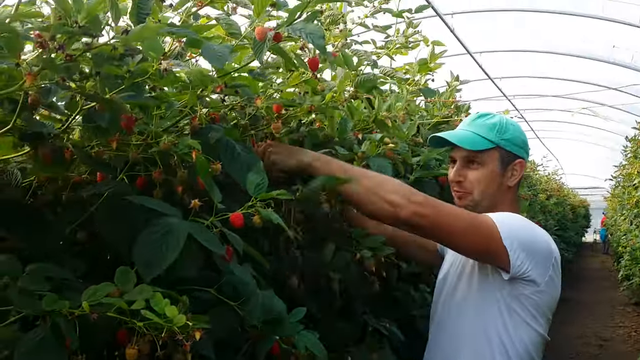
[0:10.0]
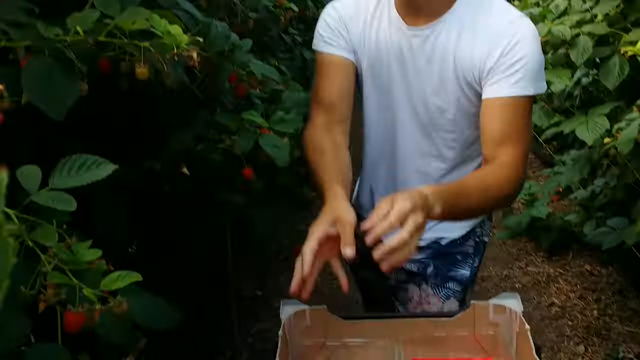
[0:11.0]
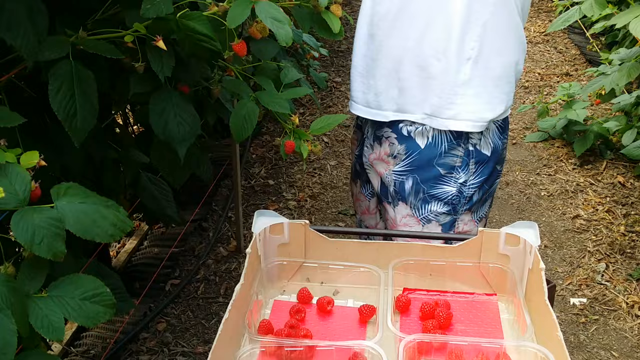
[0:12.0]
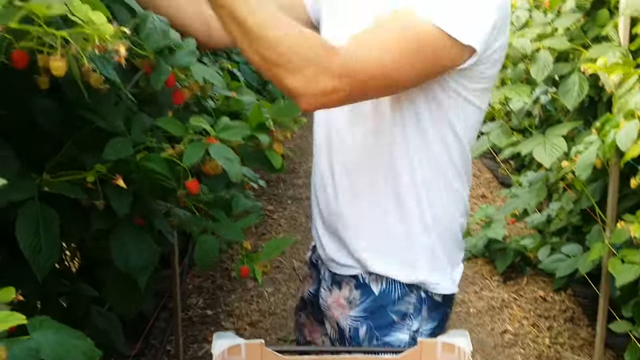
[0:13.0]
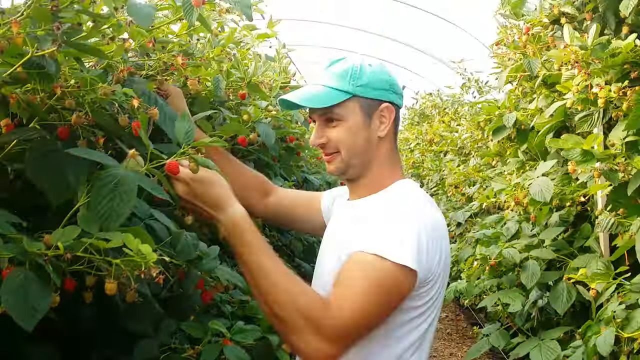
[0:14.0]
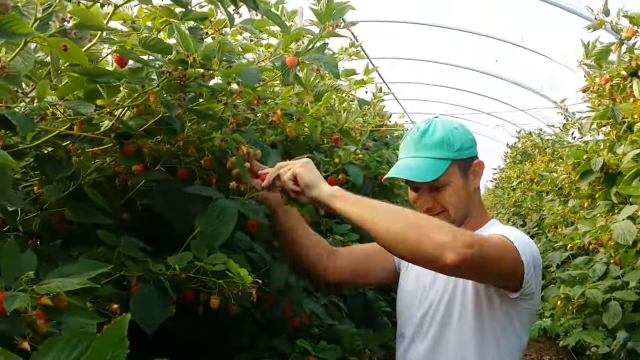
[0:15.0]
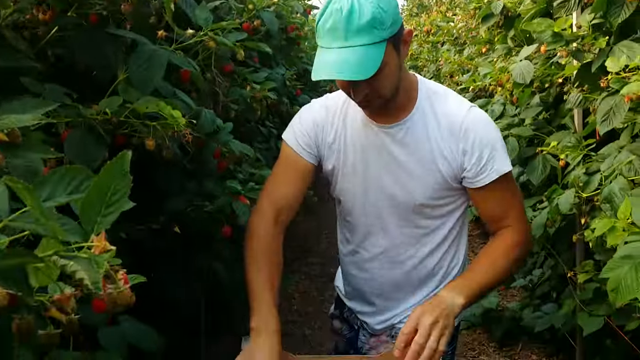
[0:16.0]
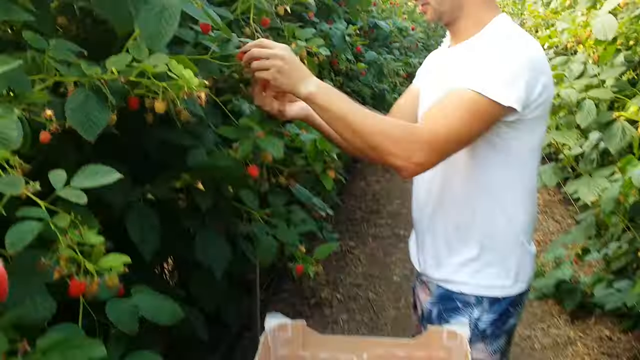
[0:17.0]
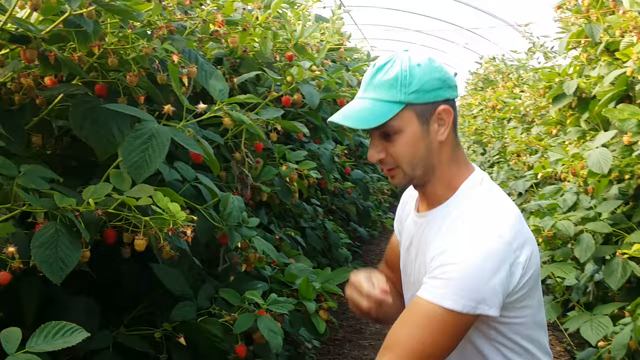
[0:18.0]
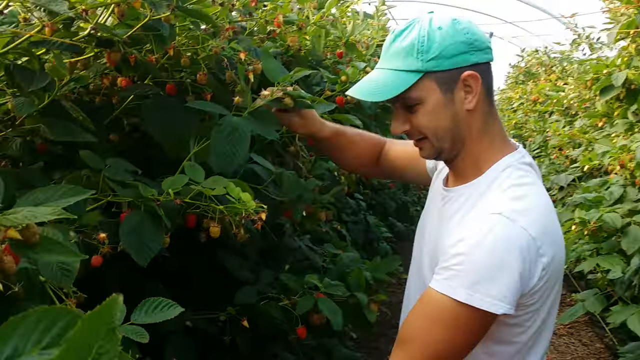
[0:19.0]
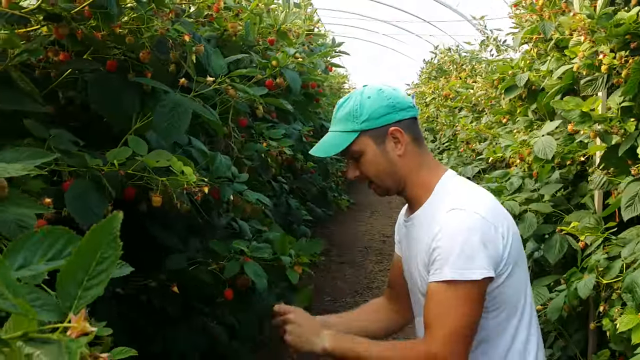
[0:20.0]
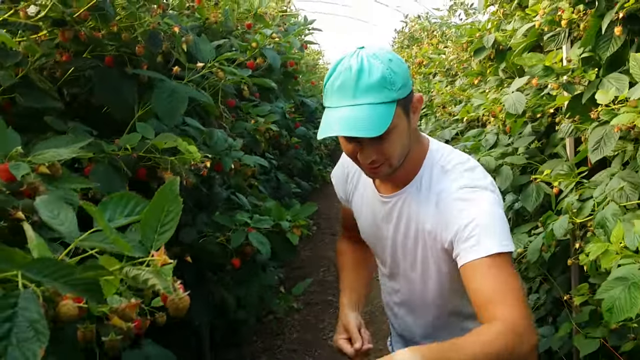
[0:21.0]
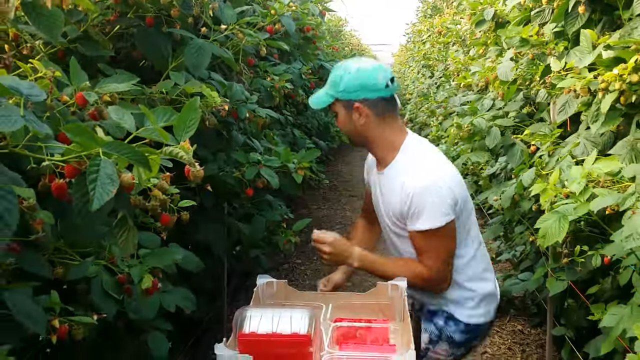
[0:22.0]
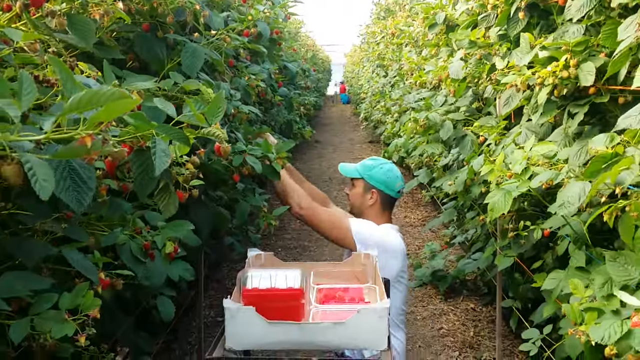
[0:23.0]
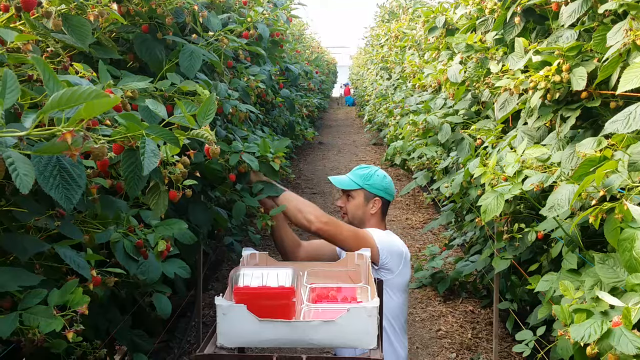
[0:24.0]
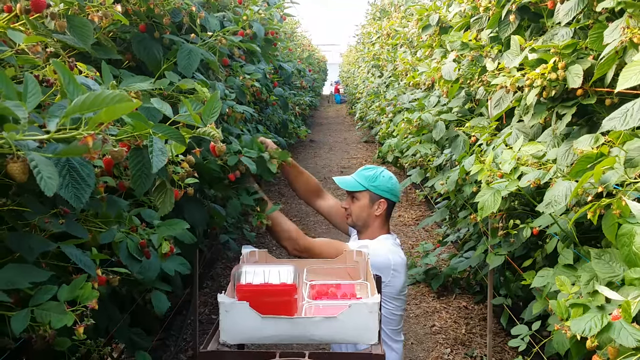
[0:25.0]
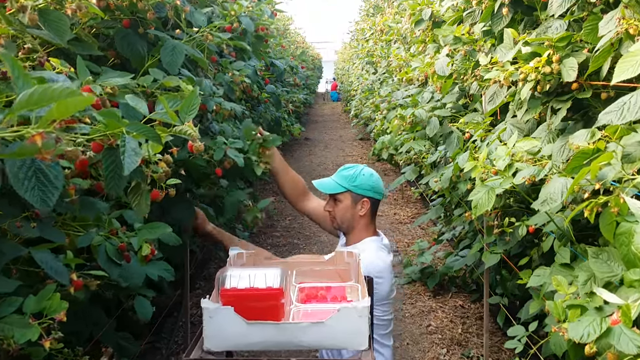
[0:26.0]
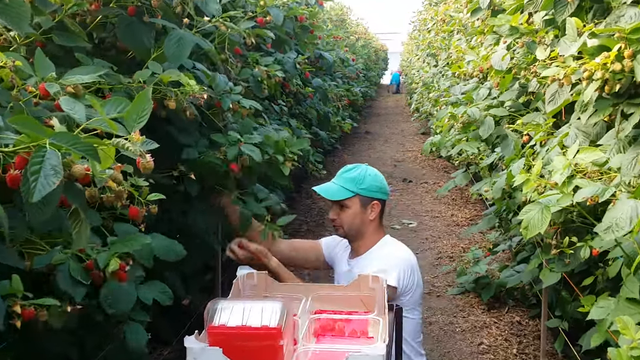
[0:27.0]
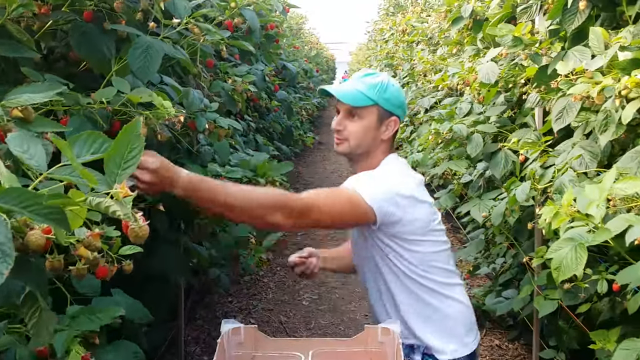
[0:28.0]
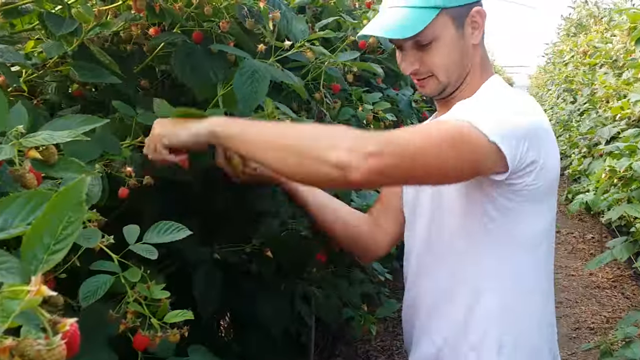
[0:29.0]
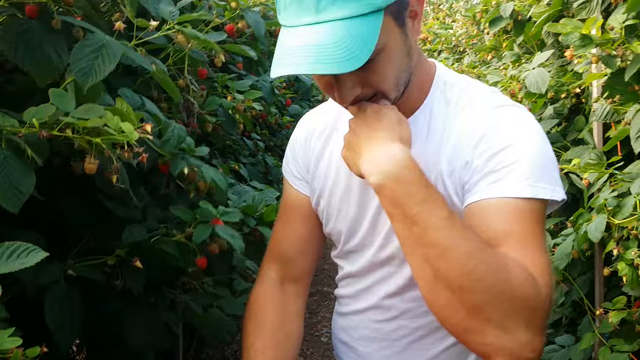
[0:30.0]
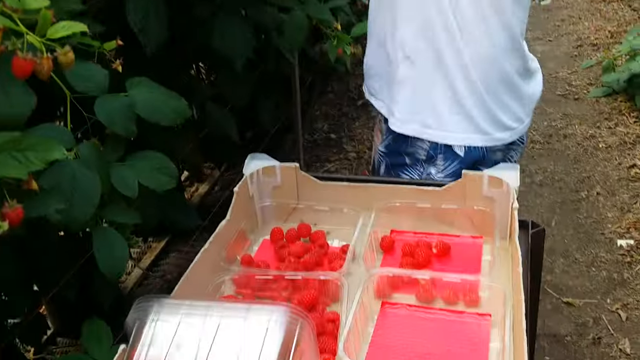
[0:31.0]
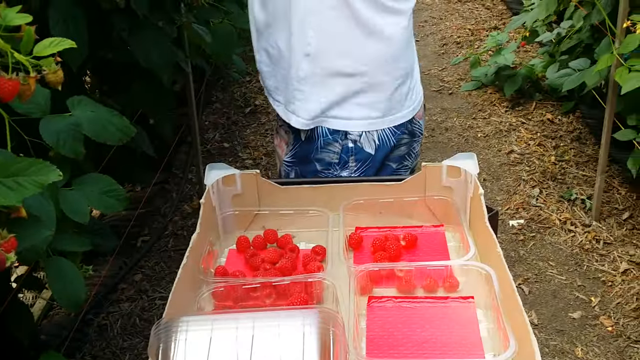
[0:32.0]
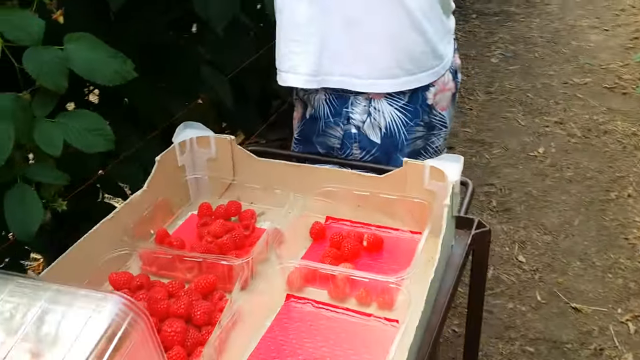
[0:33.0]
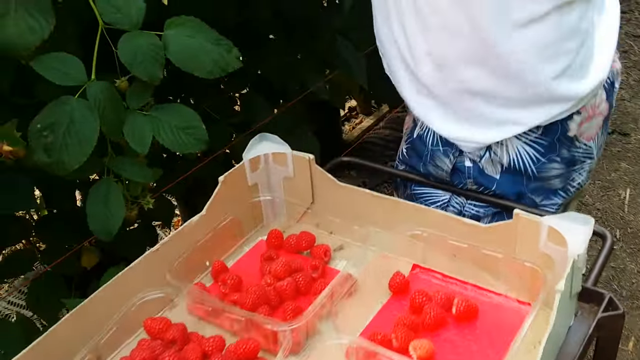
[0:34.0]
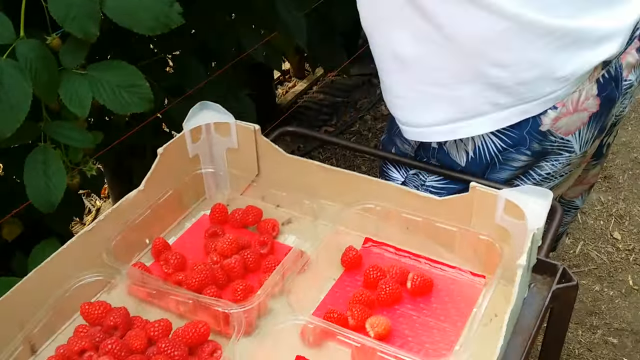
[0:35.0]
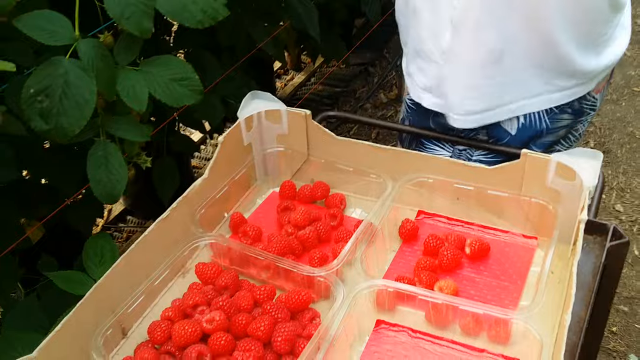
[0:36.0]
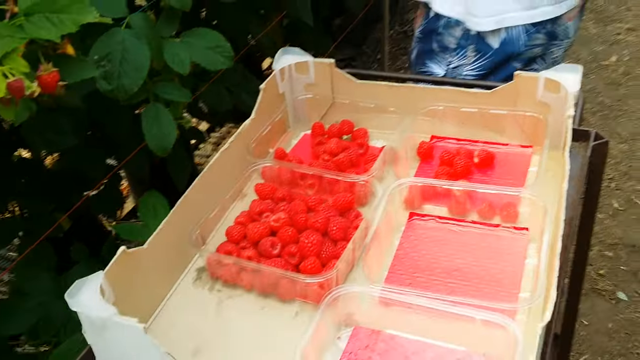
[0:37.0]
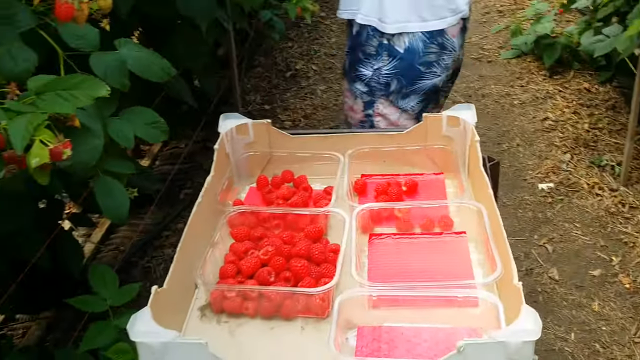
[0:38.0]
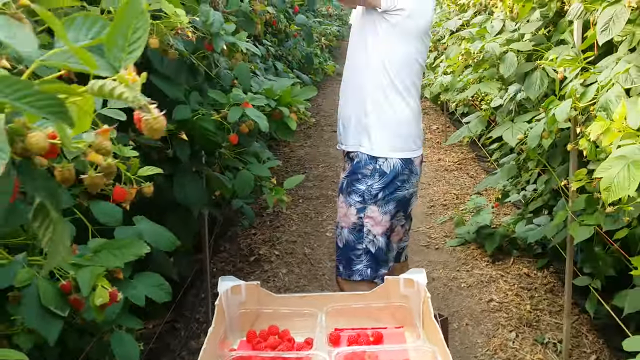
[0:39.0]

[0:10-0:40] The man is picking raspberries. A couple of raspberries are in a clear plastic container, and he has the containers out and lined up. He wears shorts with a Hawaiian floral pattern. There are leaves of different colors, light blue and white. He uses both hands to take the raspberries off the branches, eats a couple, and moves very fast. The camera zooms in on the cart, which is a dark metal cart. On it is a large, open wooden crate holding plastic containers, where he stores the raspberries he picks as he moves quickly up and down the raspberry bush, which spans more than one level.